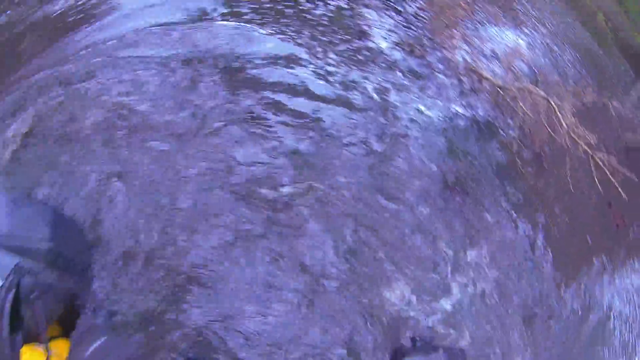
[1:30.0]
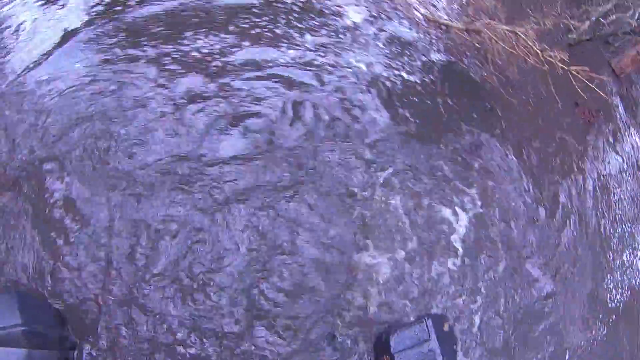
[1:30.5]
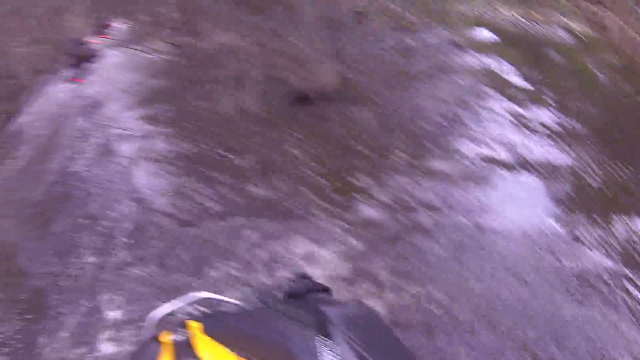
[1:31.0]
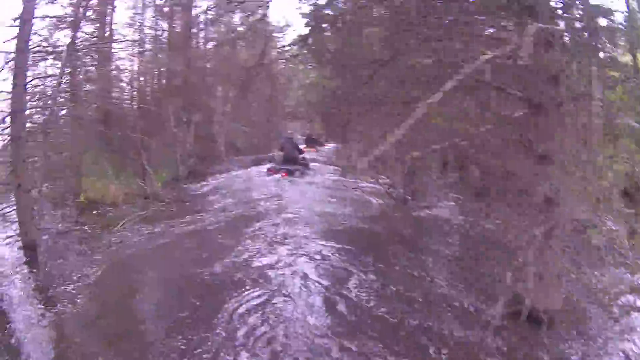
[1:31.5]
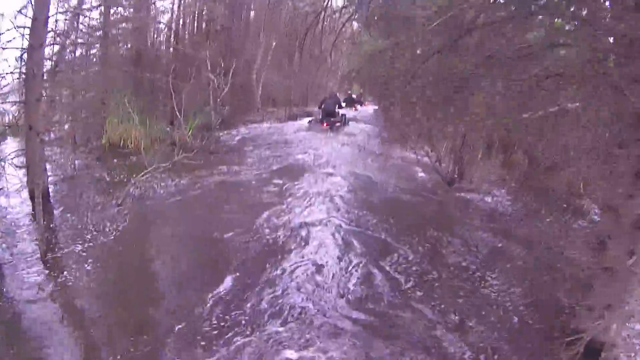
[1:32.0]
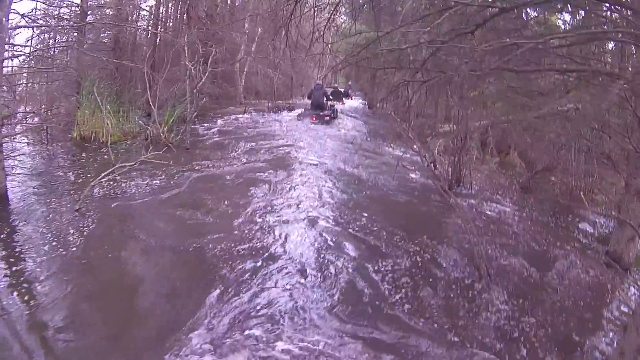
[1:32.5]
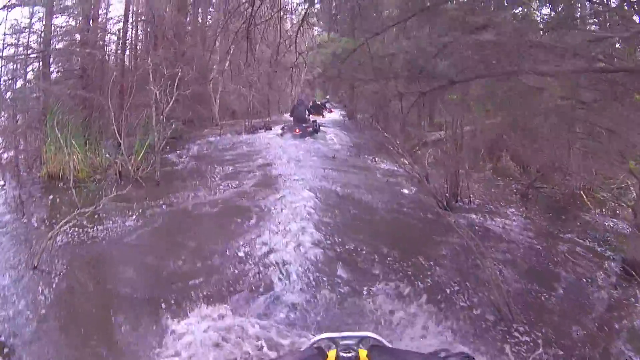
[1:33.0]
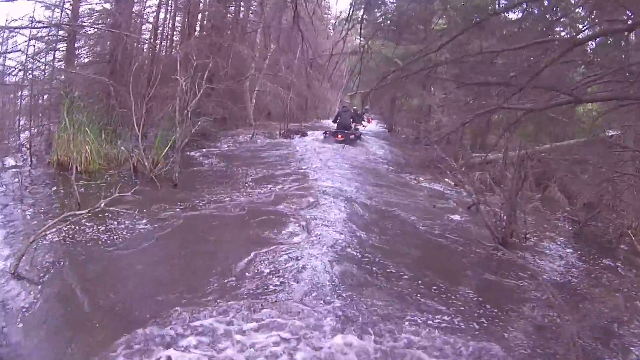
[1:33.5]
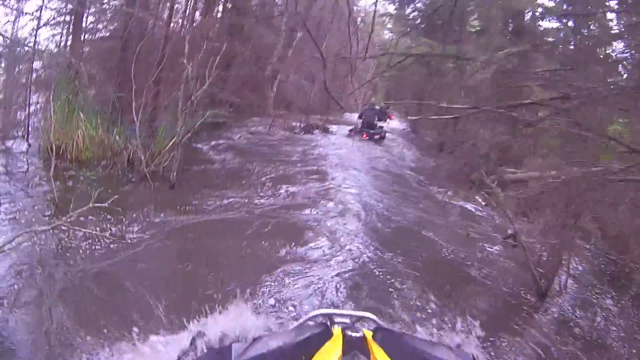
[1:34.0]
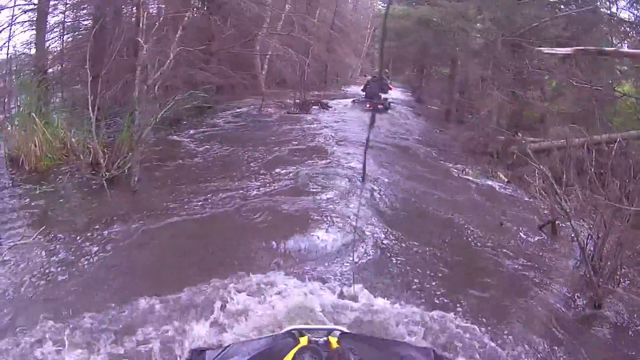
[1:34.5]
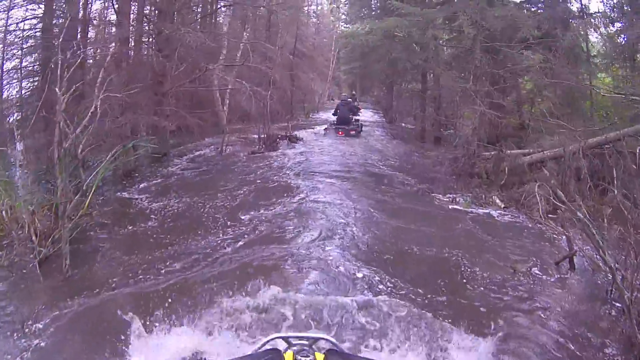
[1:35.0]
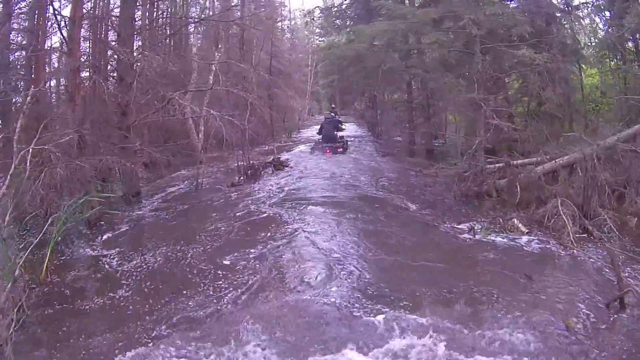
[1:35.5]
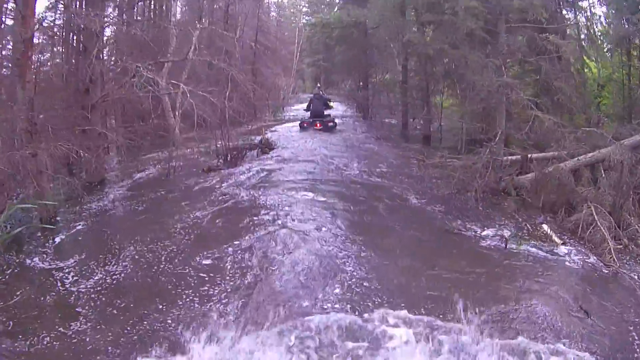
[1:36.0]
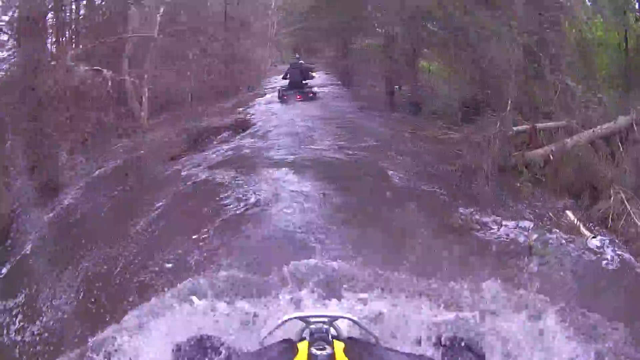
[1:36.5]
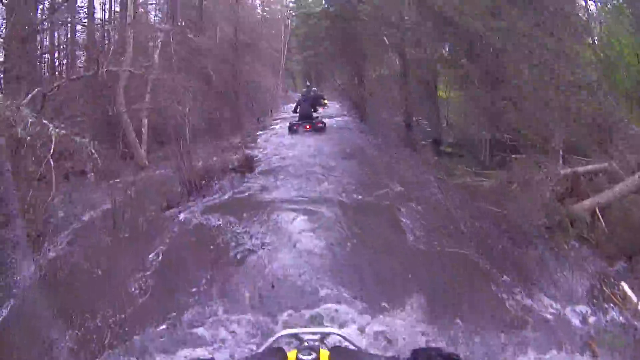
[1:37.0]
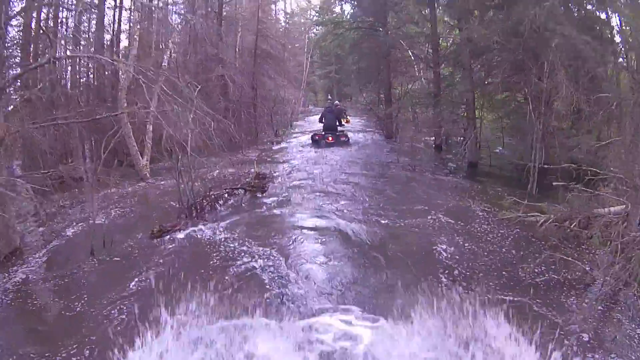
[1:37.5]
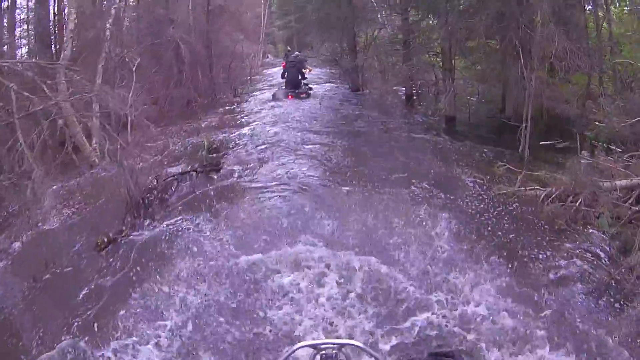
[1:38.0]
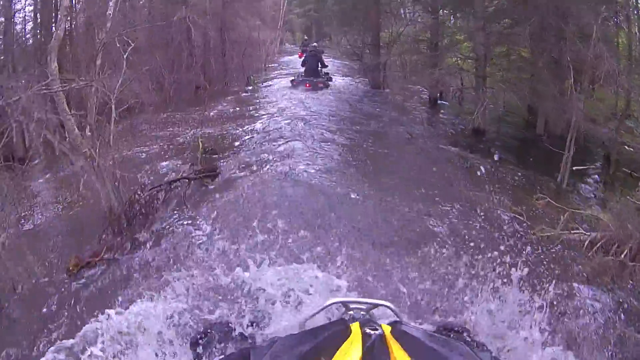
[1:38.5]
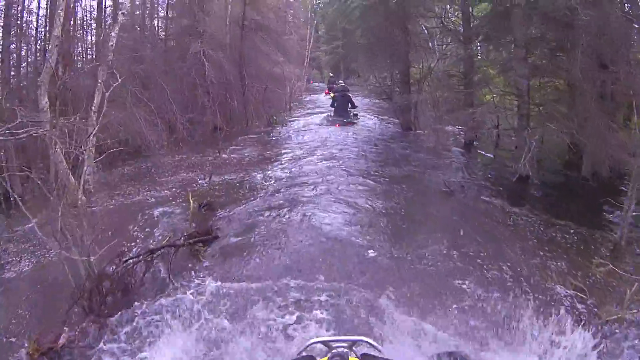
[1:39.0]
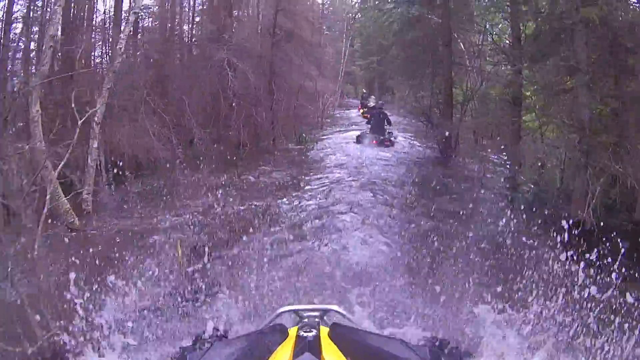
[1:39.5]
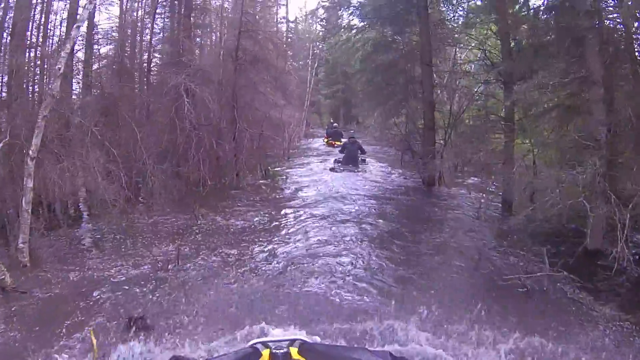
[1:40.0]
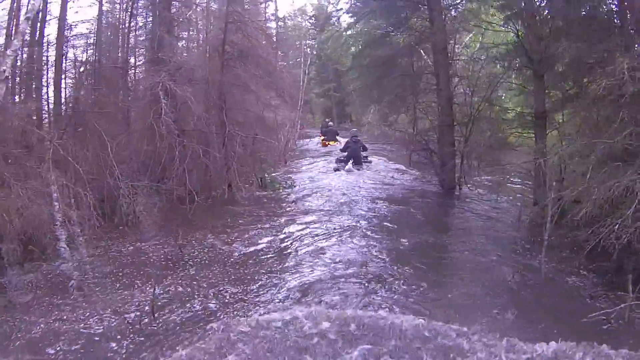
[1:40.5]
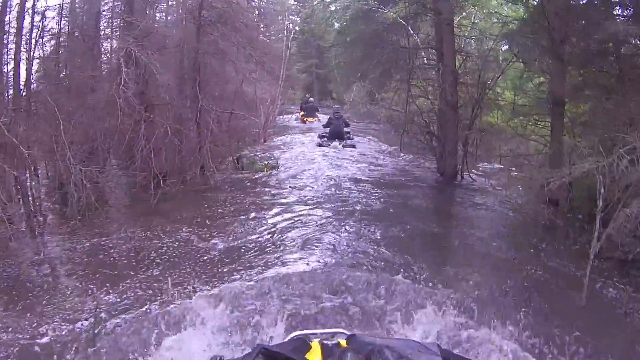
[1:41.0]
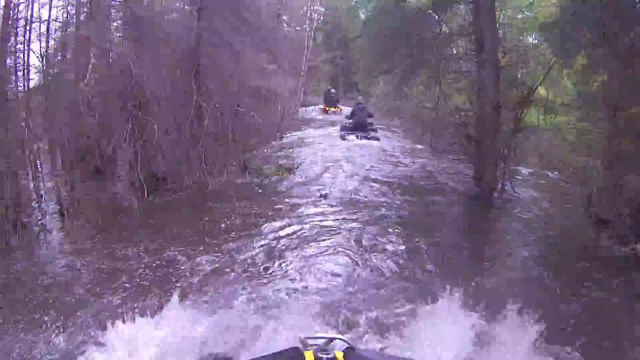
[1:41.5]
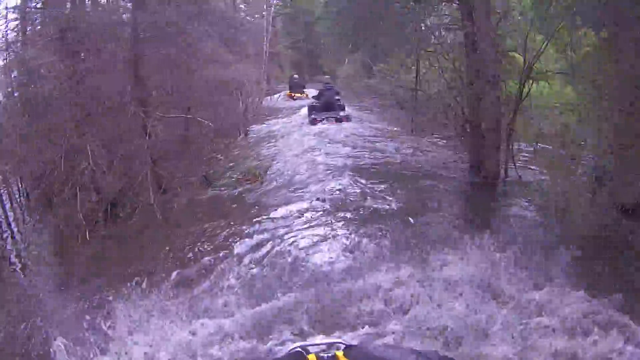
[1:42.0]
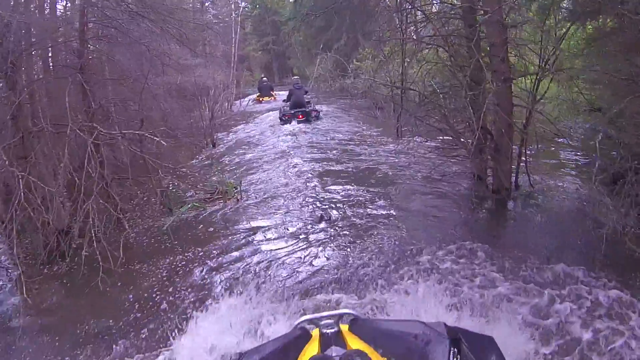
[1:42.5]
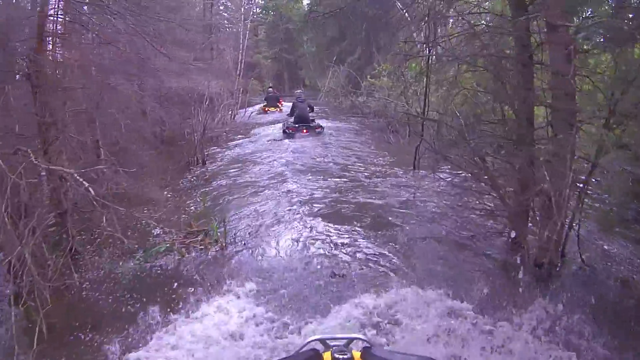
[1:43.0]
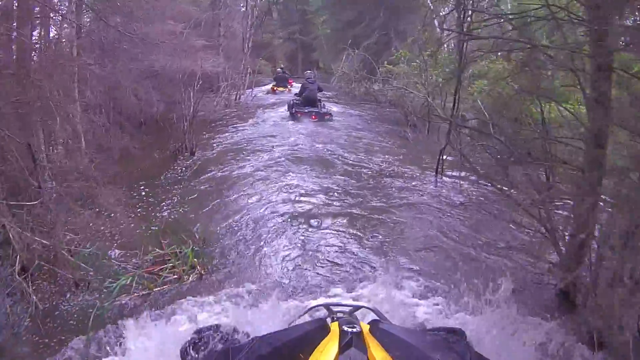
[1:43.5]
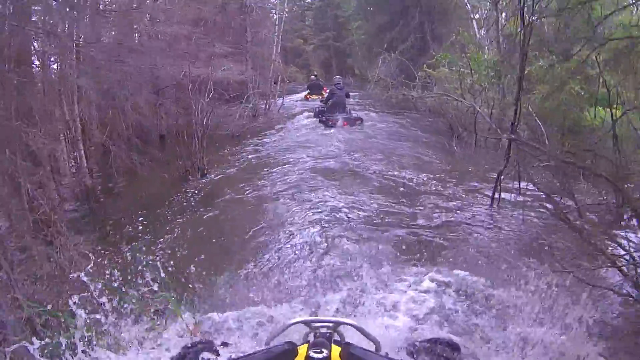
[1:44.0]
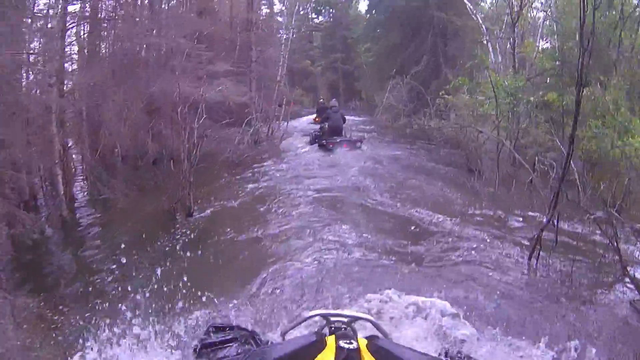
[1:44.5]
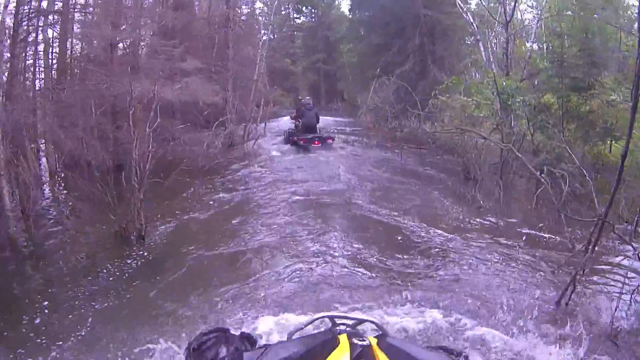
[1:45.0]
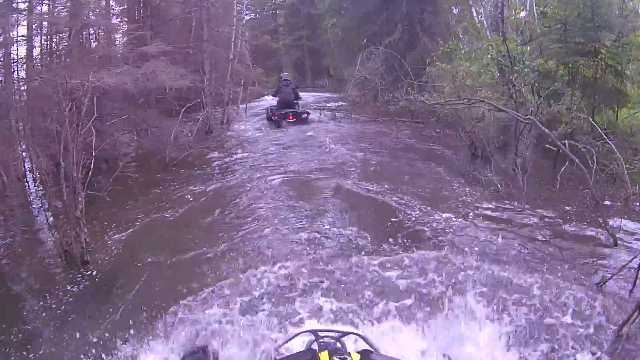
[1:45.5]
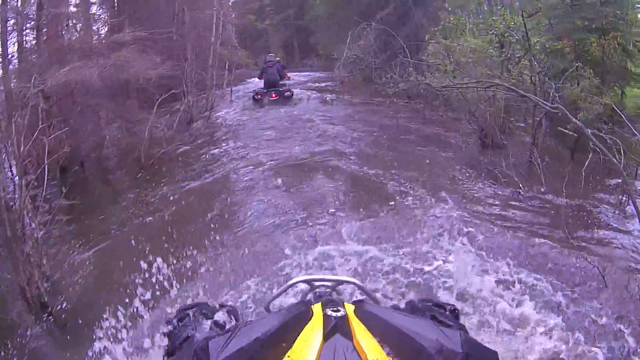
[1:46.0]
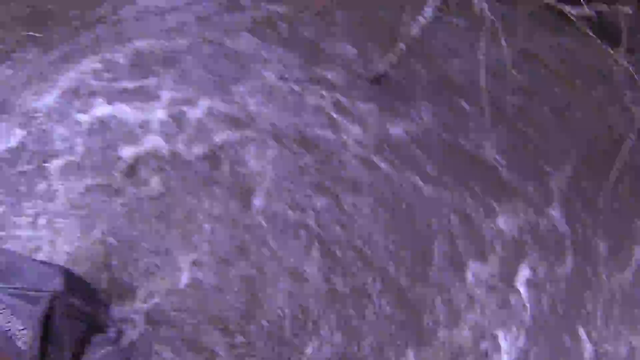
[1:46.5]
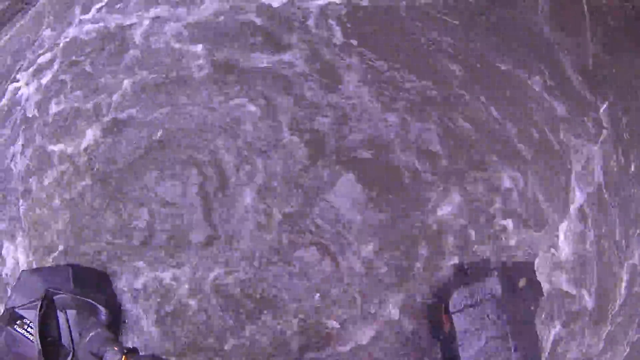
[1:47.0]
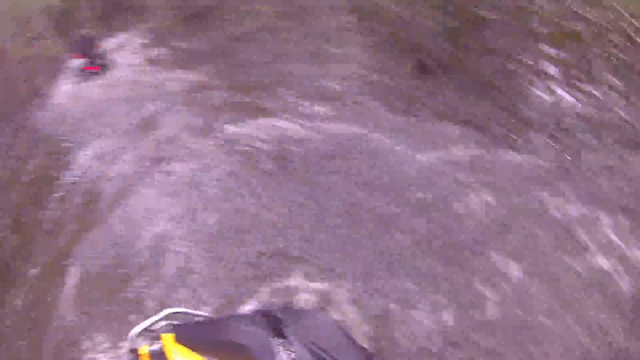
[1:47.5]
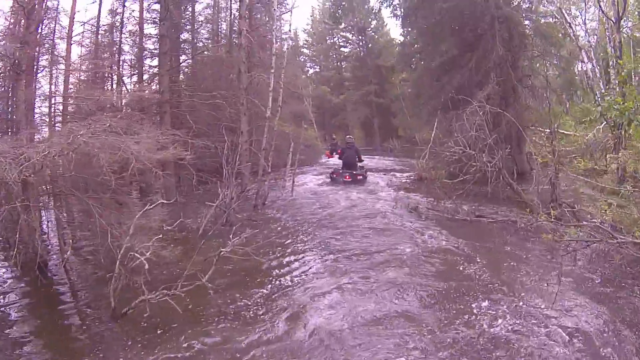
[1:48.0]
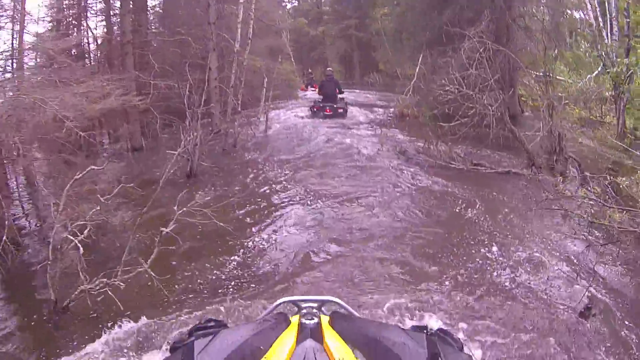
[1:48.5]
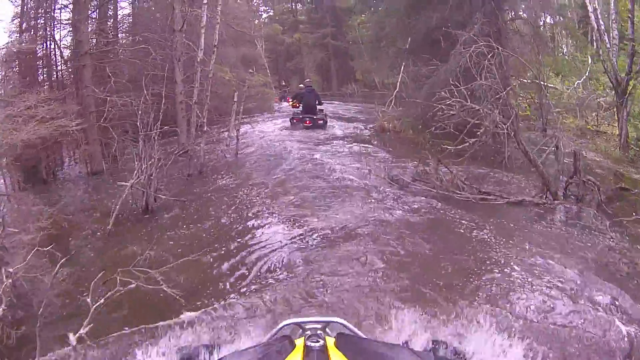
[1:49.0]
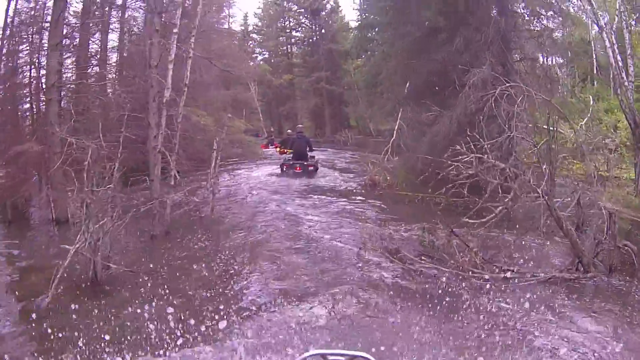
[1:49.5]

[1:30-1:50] The camera starts by looking directly at the water, which is acting violently and going in lots of different directions. It looks quite deep, with huge chunks of branches and leaves around them as they drive along what was a path. The person filming goes really slowly while the two people in front of him start to pick up the pace; he is apparently in the same spot where the other guy struggled earlier, struggling through the difficult part by himself. In the distance, the two guys get smaller. The scenery is the same ahead and behind: a muddy, flooded path. Finally, he gets kind of stuck in the same spot where the other guy was stuck.